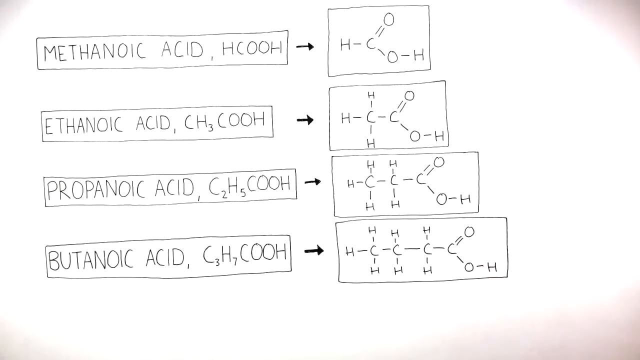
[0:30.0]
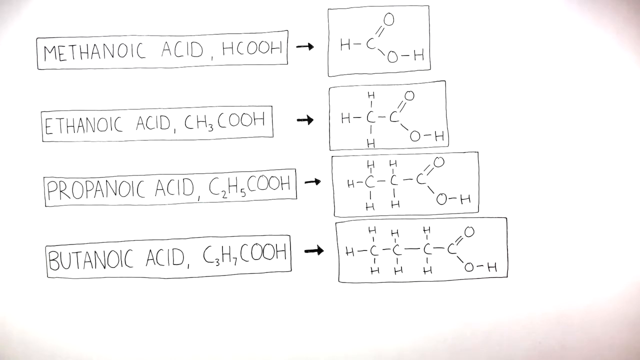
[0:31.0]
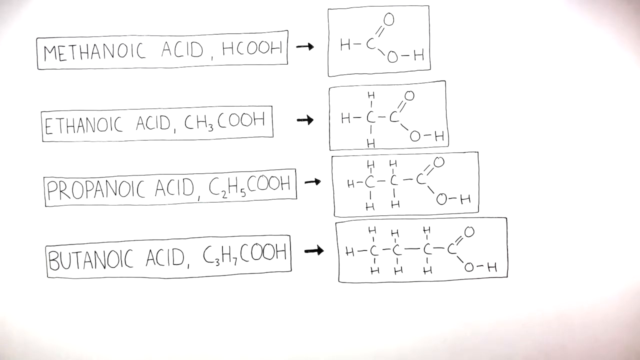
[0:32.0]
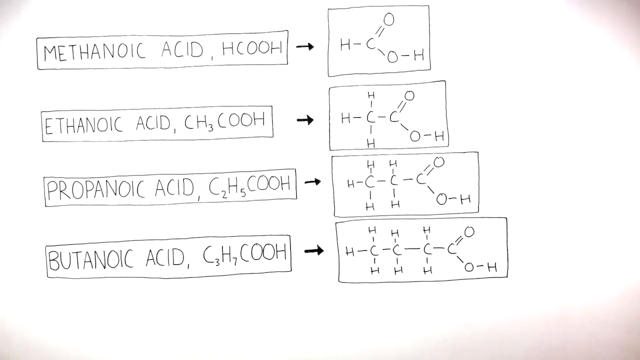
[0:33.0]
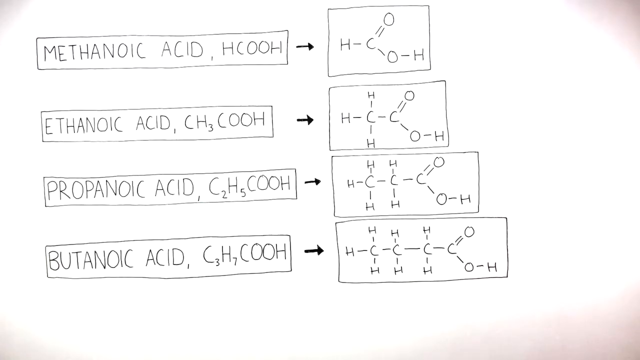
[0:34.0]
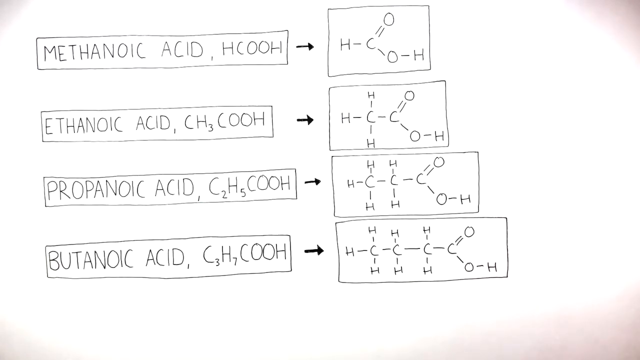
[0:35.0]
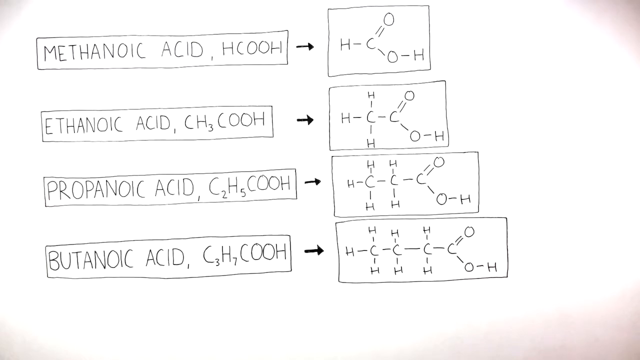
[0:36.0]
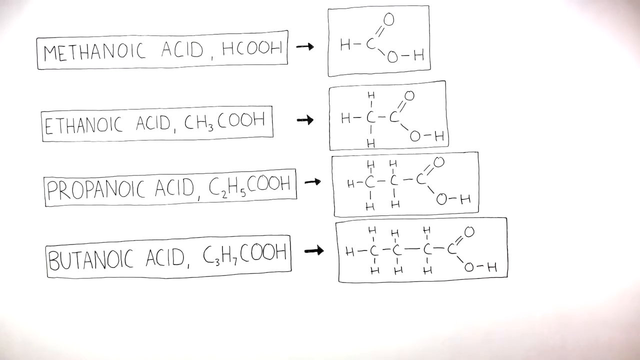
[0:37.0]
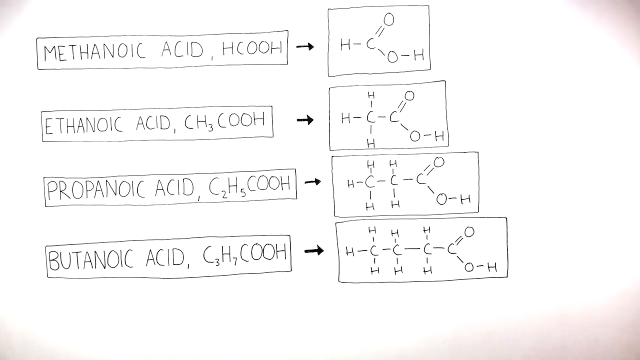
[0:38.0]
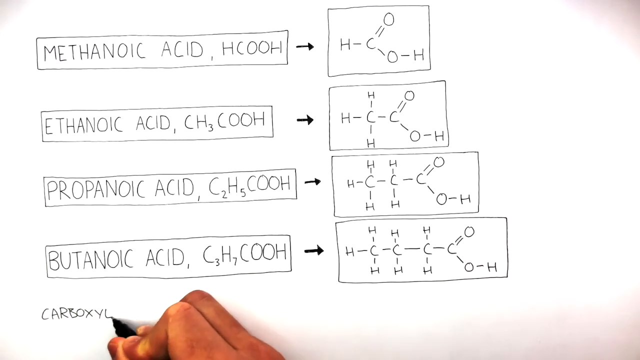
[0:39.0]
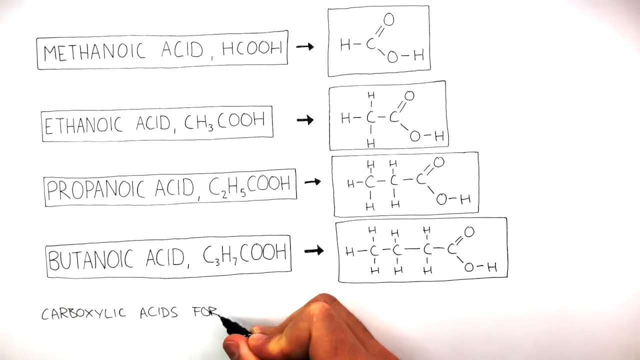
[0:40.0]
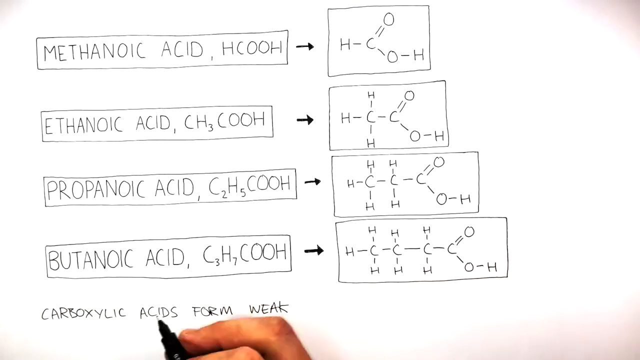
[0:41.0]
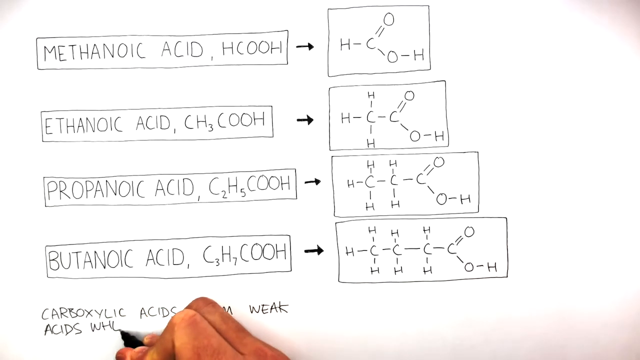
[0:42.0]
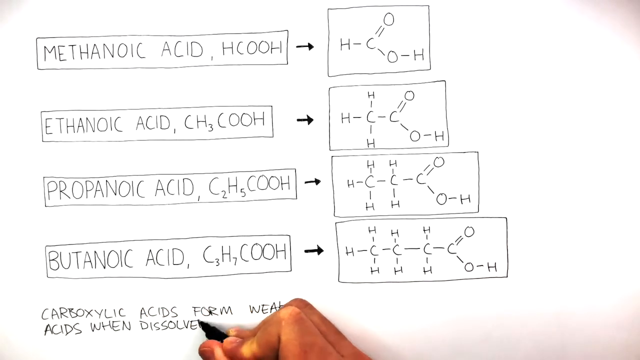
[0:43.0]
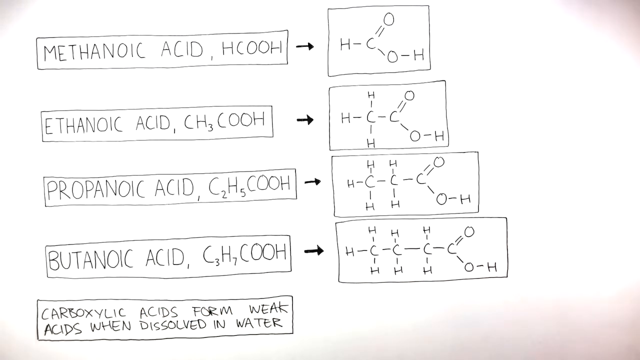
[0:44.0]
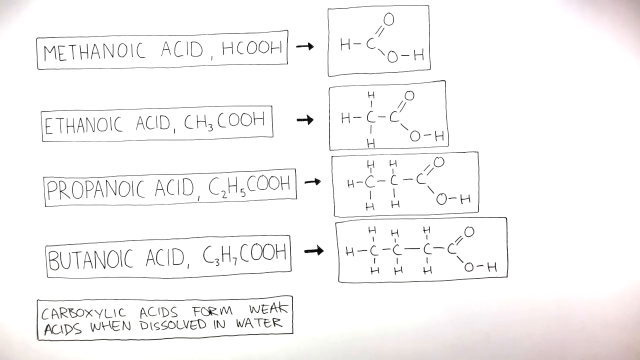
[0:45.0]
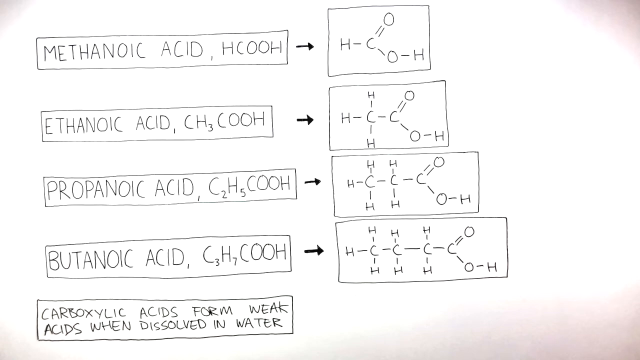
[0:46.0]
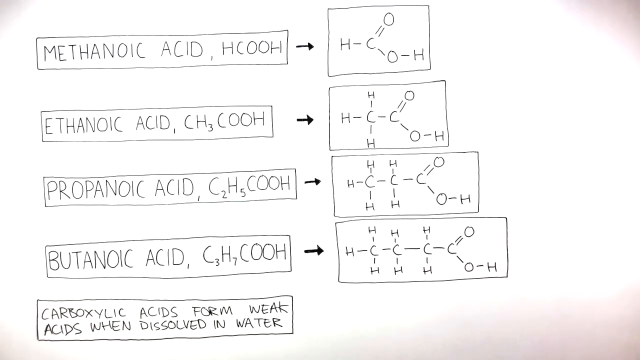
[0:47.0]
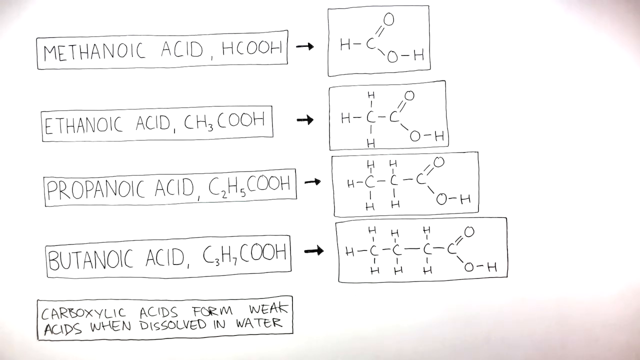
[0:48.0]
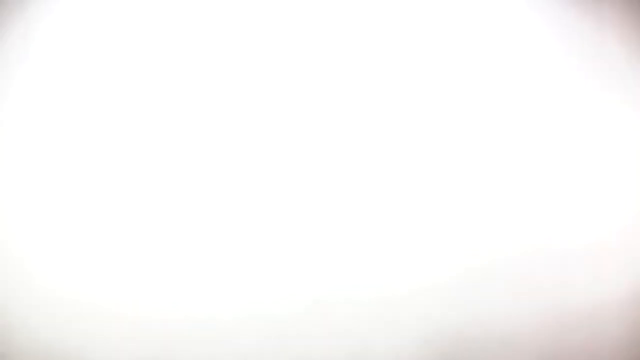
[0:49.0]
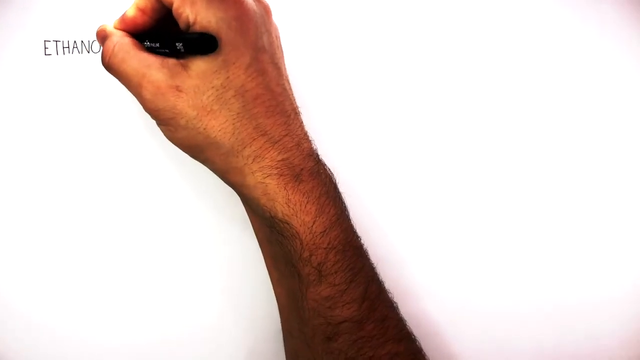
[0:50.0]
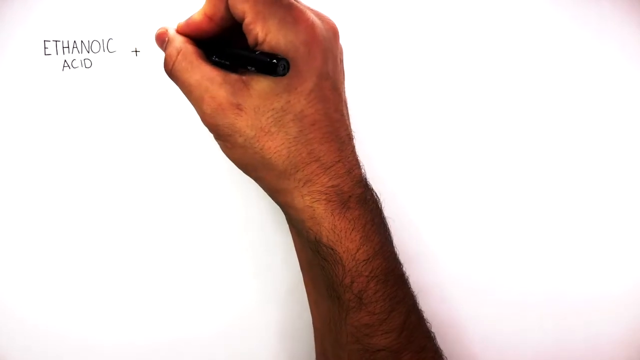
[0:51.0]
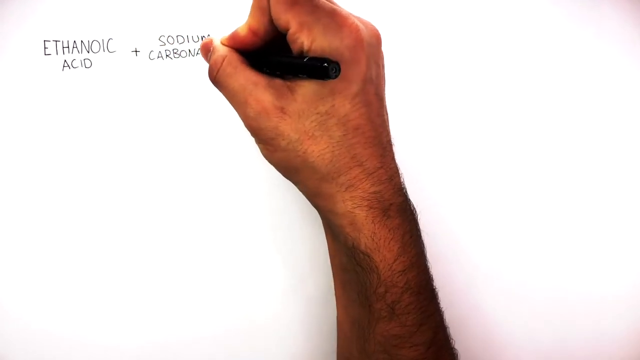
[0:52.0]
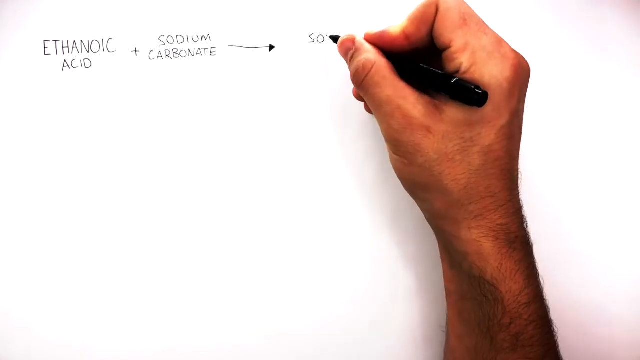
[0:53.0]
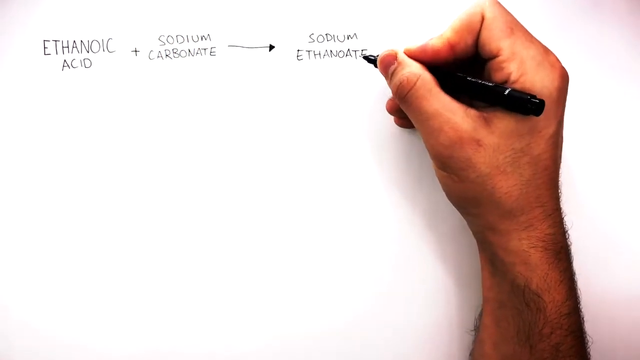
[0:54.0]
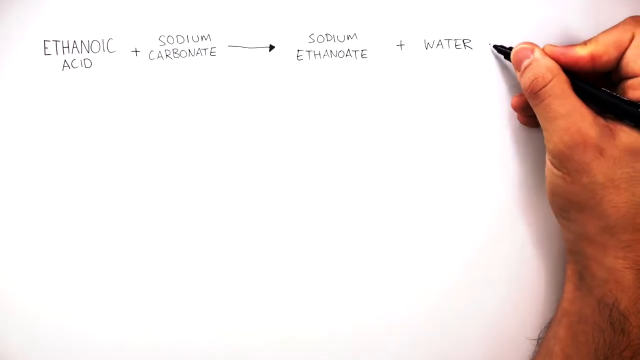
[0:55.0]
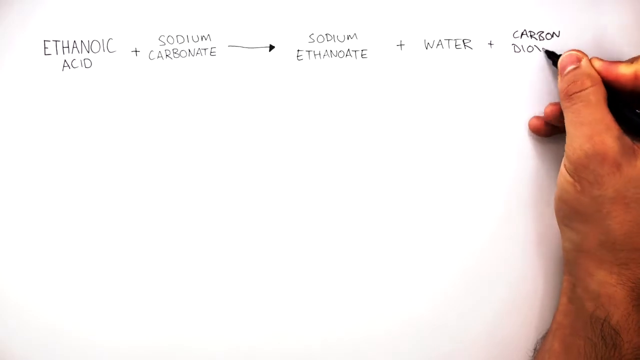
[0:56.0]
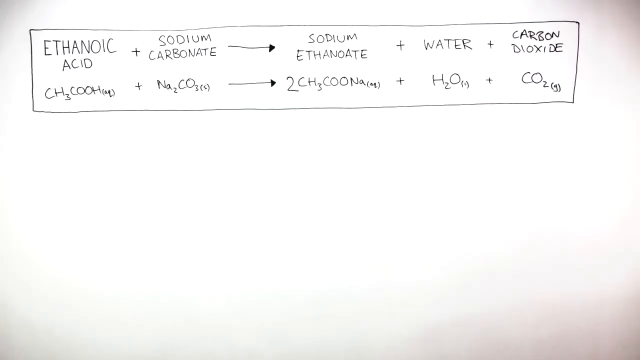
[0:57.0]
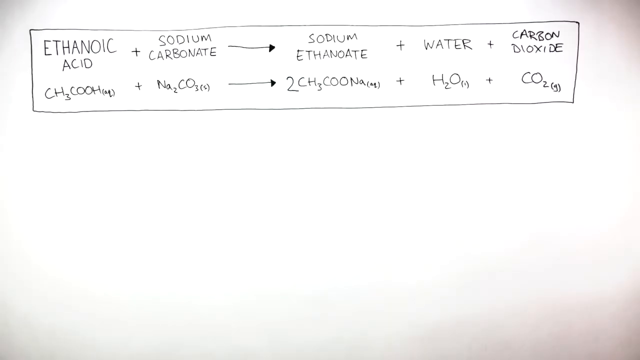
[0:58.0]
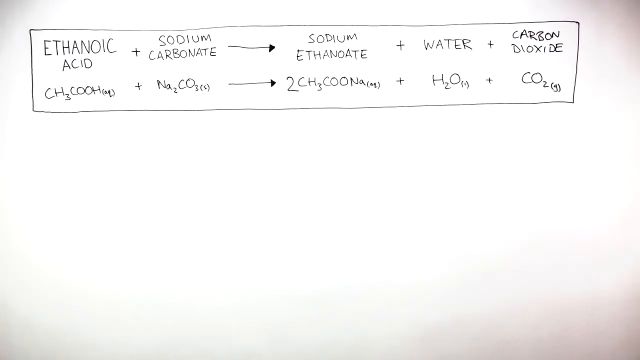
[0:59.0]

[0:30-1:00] With the chemical structures of methanoic acid, ethanoic acid, propanoic acid and butanoic acid still shown, a person's hand appears at the bottom of the screen and writes out "carboxylic acids form weak acids when dissolved in water". The person then draws a rectangle around the text to put it in a box. The page clears and transitions to a scene showing a chemical reaction between ethanoic acid plus sodium carbonate. A reaction arrow appears as the person's right hand writes out the entire reaction: ethanoic acid plus sodium carbonate reacts to form sodium ethanoate, water and carbon dioxide. The chemical formula form of the equation is displayed below. The whole reaction, with both the names of the chemicals and the chemical formulas, is enclosed in a rectangular box.